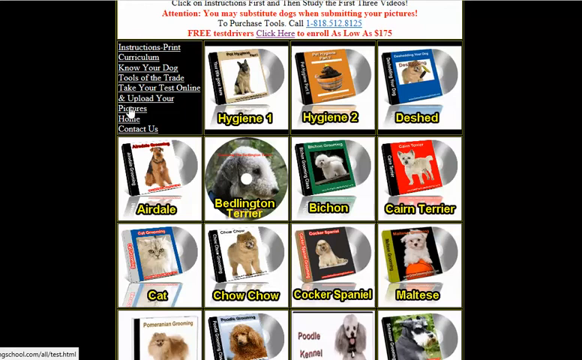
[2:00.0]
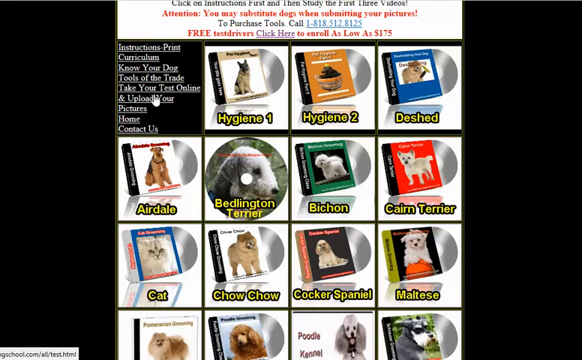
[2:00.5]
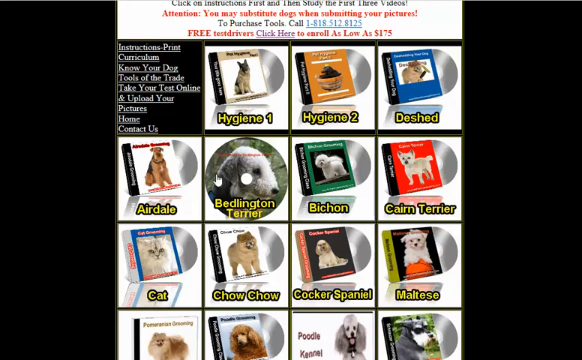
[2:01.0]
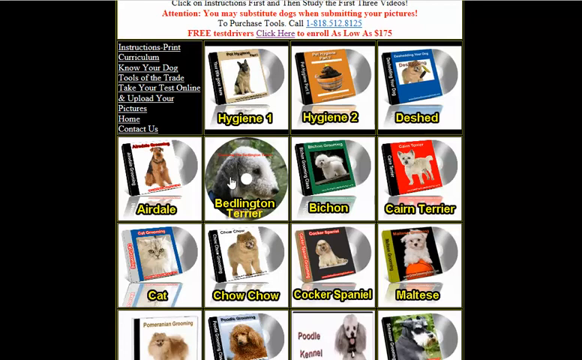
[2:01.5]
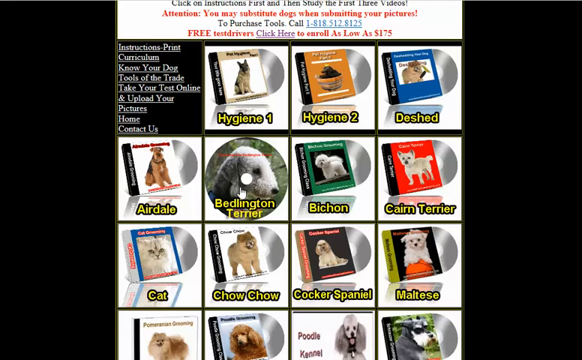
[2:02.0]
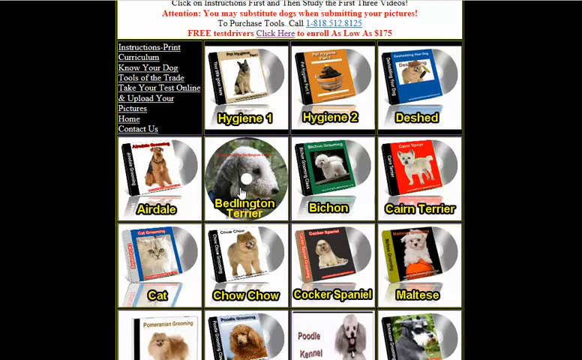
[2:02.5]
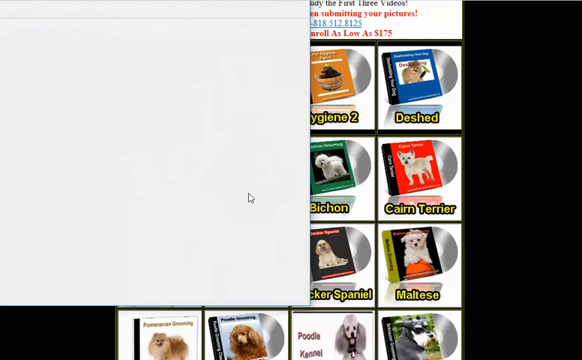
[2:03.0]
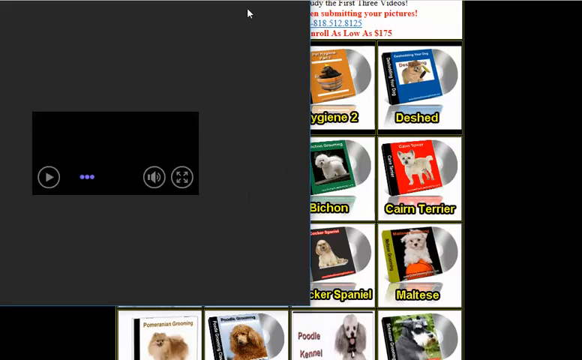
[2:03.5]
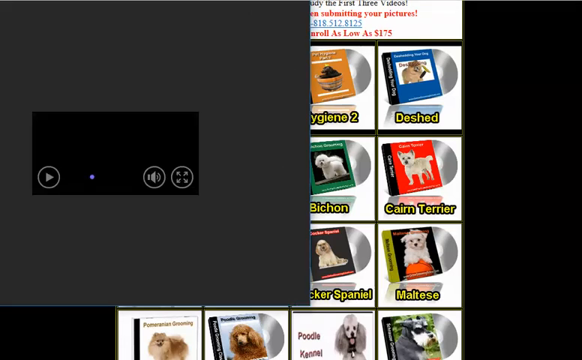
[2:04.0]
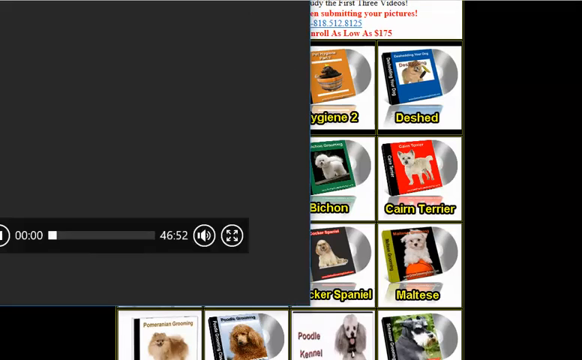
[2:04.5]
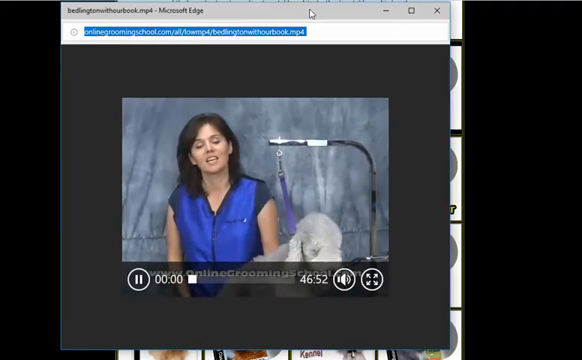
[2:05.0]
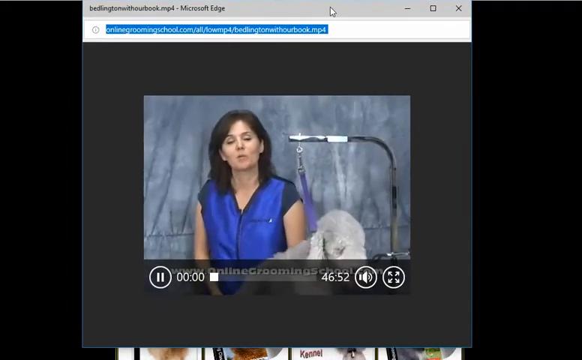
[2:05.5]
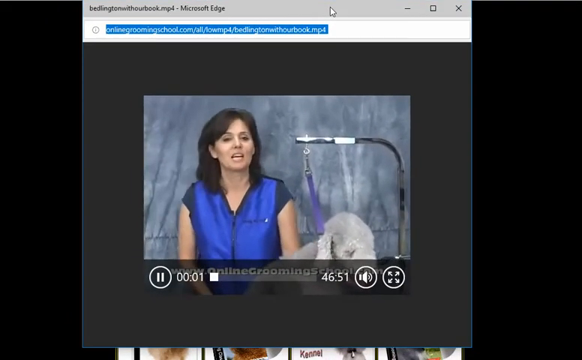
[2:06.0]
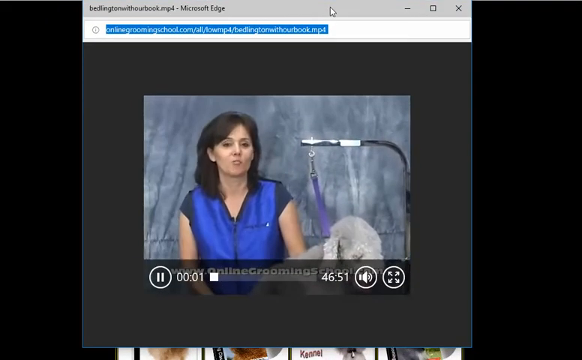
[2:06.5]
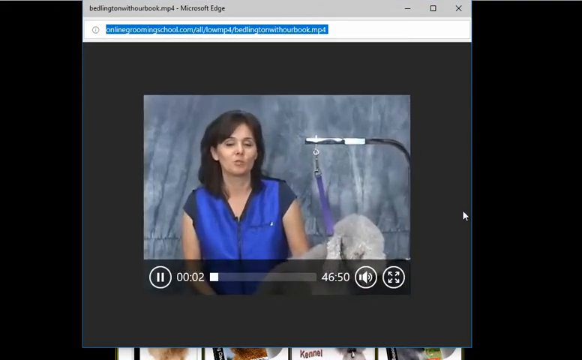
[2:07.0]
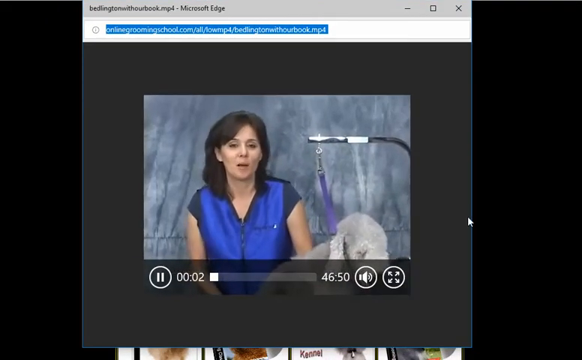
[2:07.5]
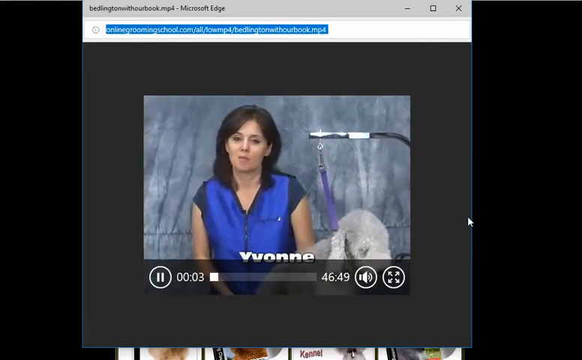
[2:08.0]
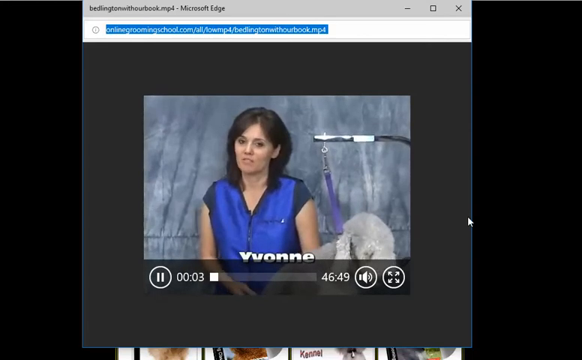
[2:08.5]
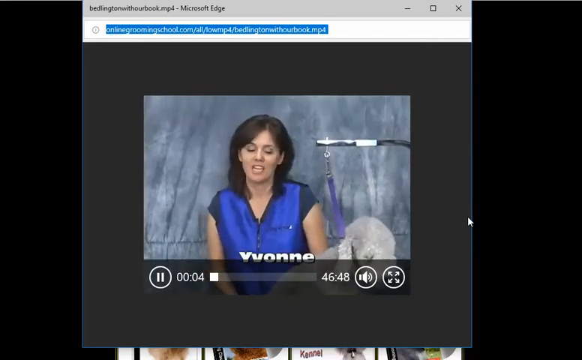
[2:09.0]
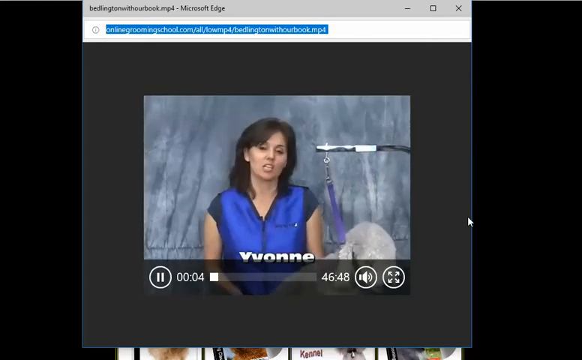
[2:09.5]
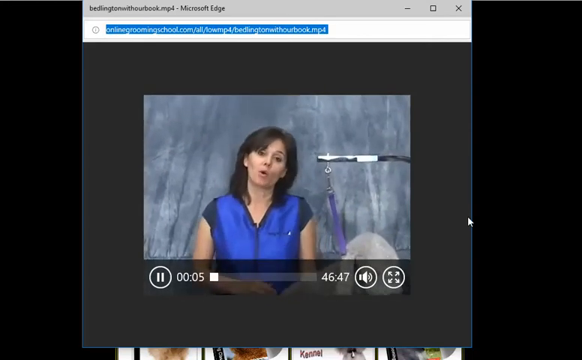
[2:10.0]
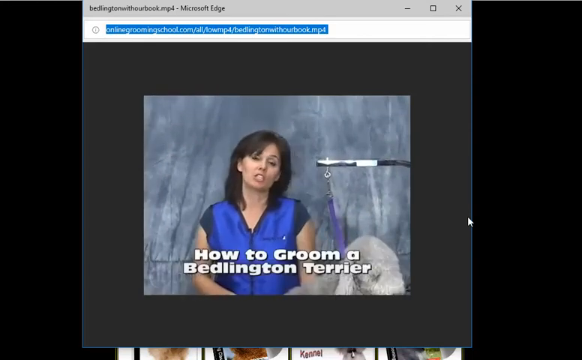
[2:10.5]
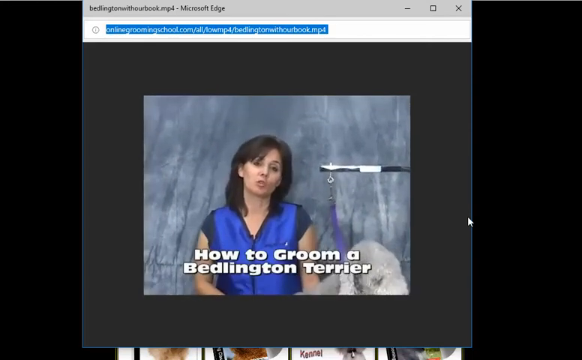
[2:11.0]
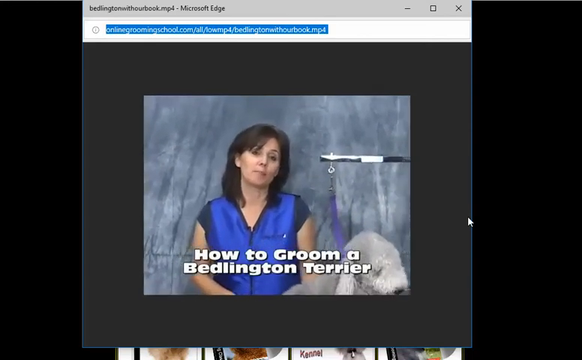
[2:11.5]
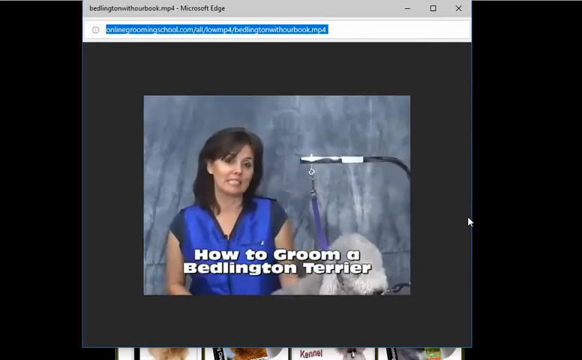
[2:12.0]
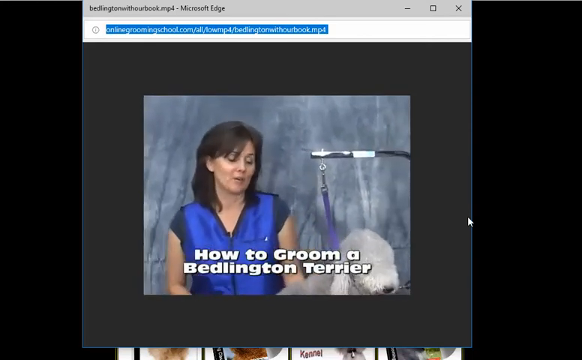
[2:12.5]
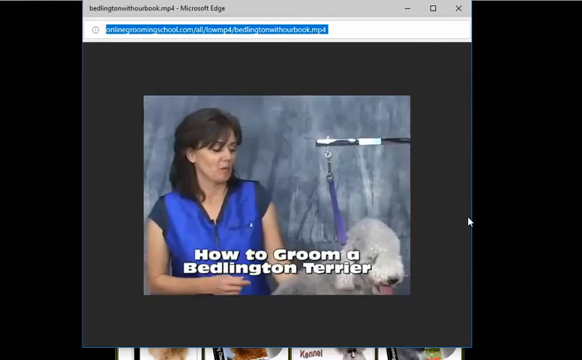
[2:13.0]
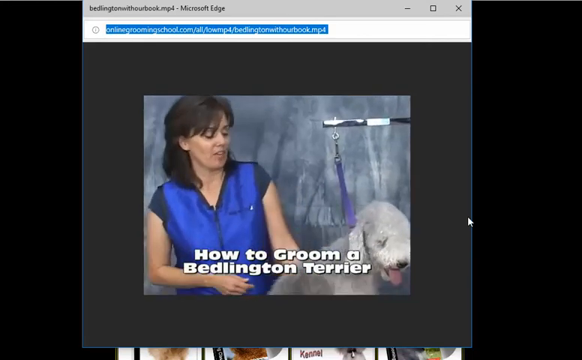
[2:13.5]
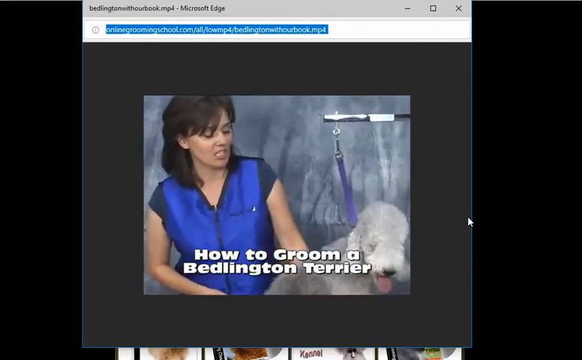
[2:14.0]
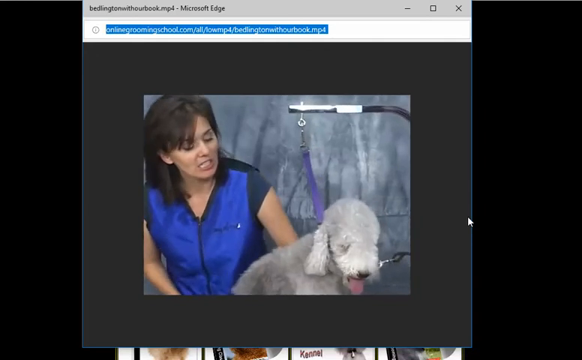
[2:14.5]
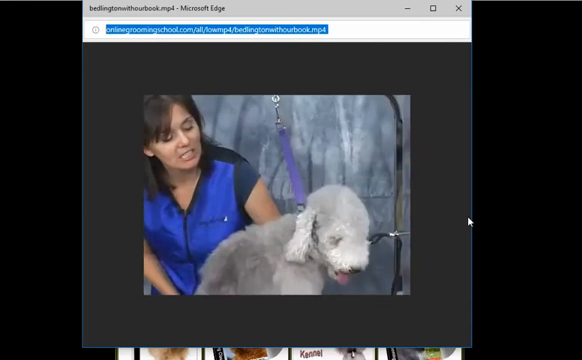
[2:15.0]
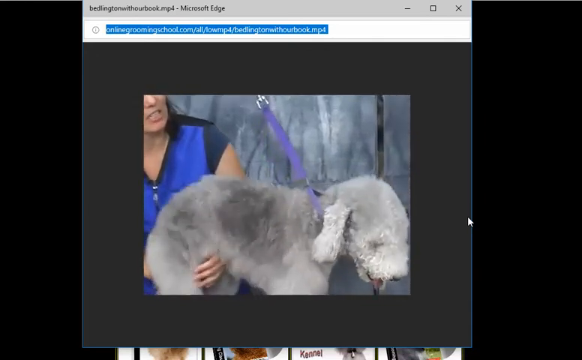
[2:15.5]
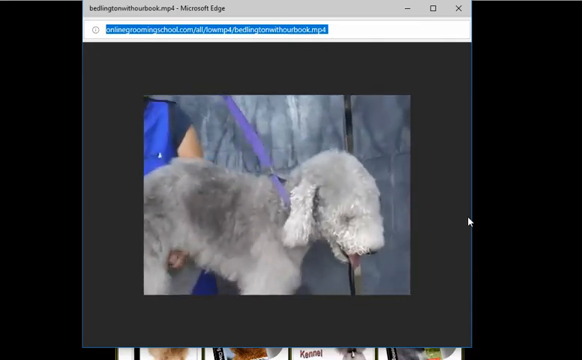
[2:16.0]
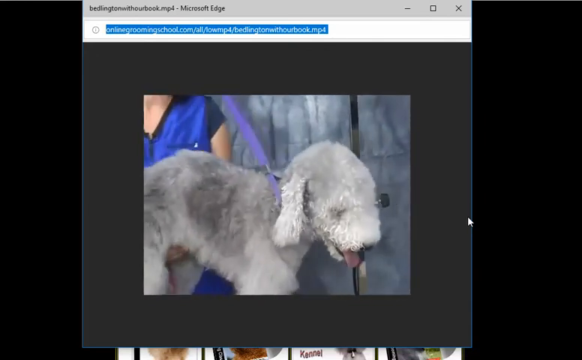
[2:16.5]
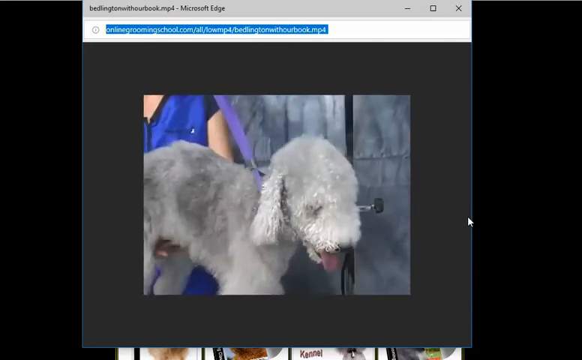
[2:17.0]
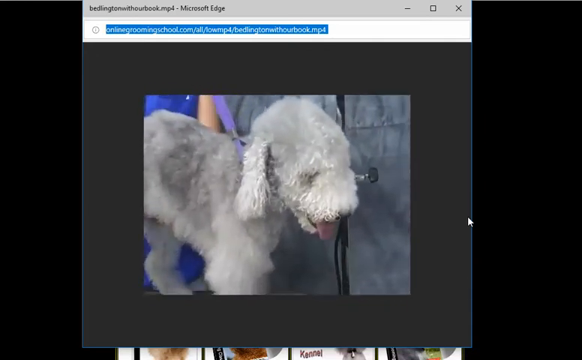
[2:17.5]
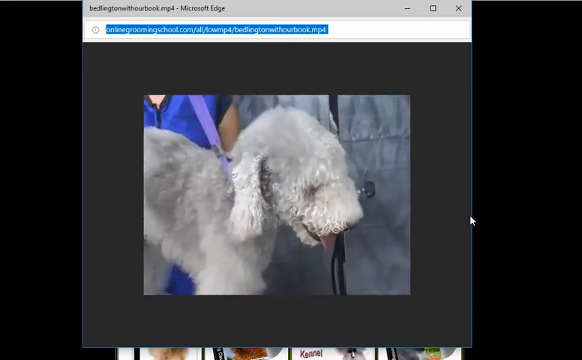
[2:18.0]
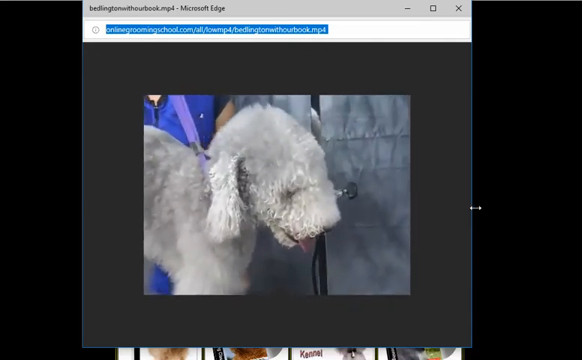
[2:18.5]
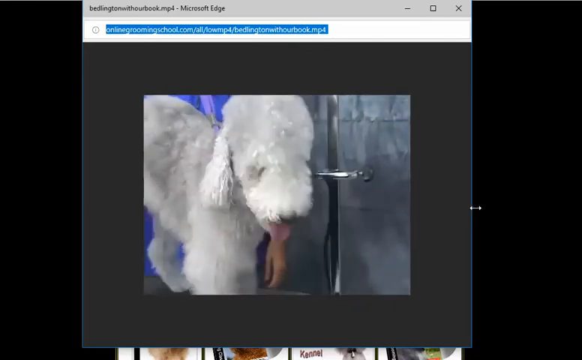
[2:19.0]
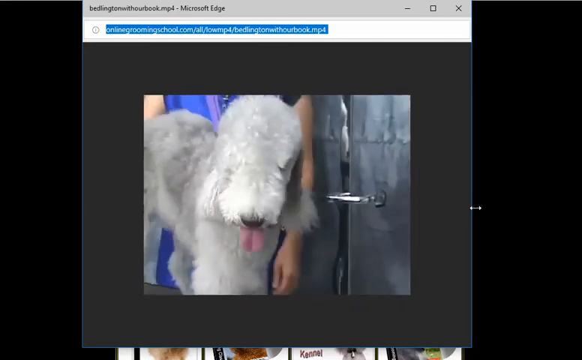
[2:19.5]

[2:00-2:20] On the disc page, the mouse hovers over the subject "take your test online and upload your pictures", then moves back to the Bedlington Terrier disc and clicks it. A black box with a video playing appears over the disc page and moves to the centre of the screen. The address shown ends in "bedlingtonwithoutbook.mp4". In the video, a woman named Yvonne with brown hair, in a blue zip top, talks to the camera; in front of her is a dog in a dog washing station. A title comes on the screen saying "how to groom a Bedlington Terrier". The grey Bedlington Terrier is sat at the washing station with his pink tongue out. The woman lifts his hindquarters so he is standing straight. He is attached to the station with a purple lead, and he looks around.